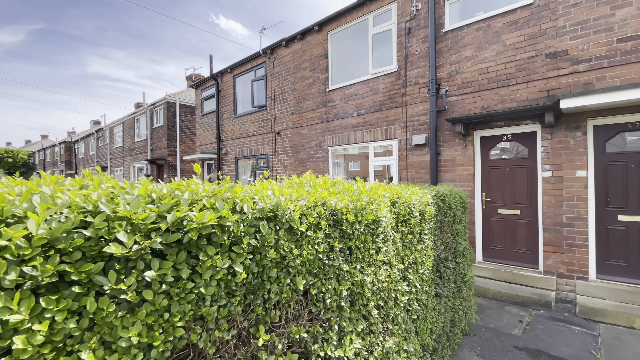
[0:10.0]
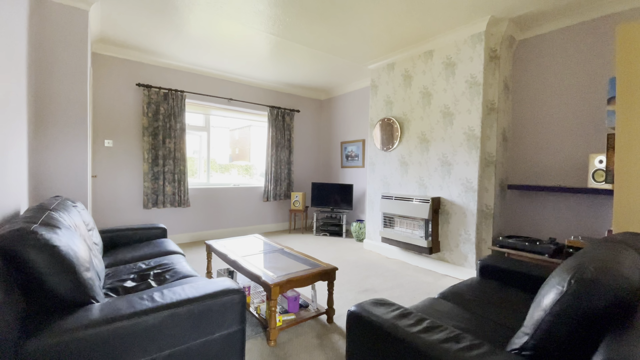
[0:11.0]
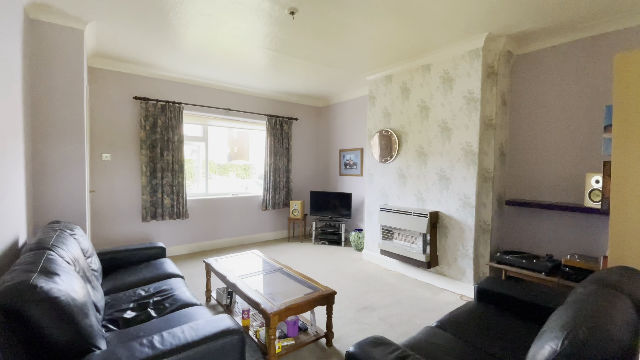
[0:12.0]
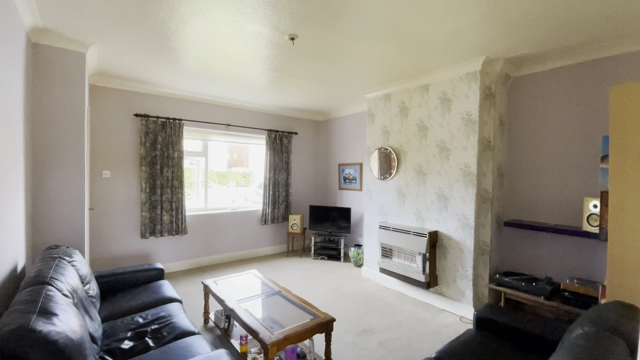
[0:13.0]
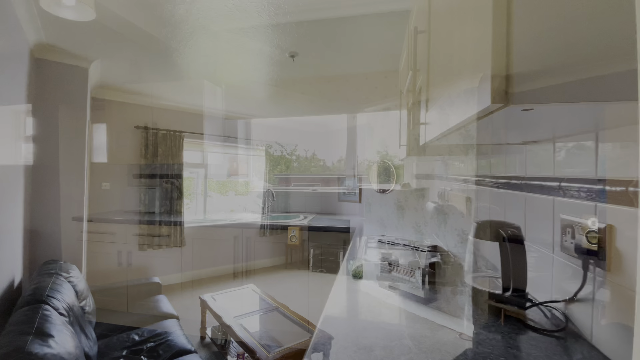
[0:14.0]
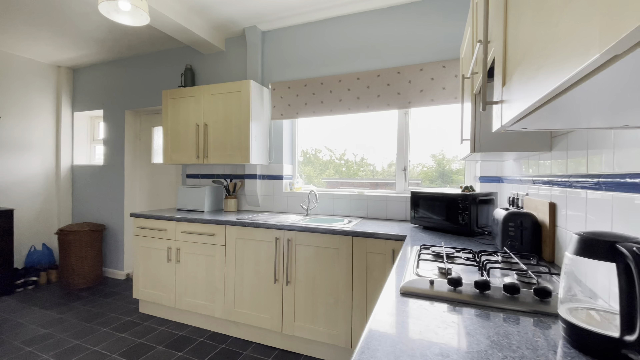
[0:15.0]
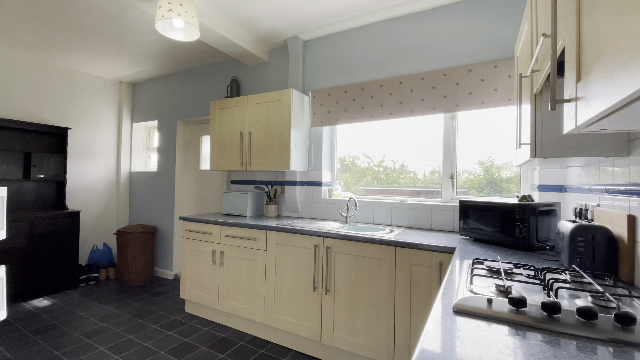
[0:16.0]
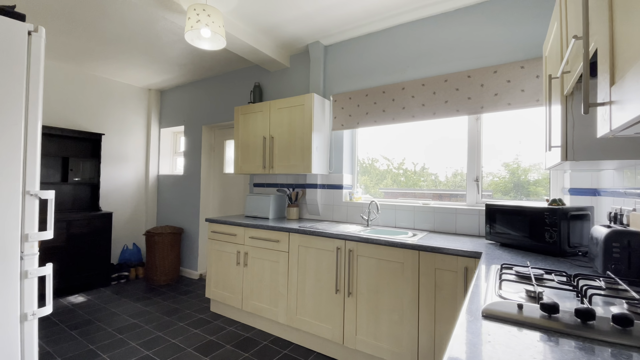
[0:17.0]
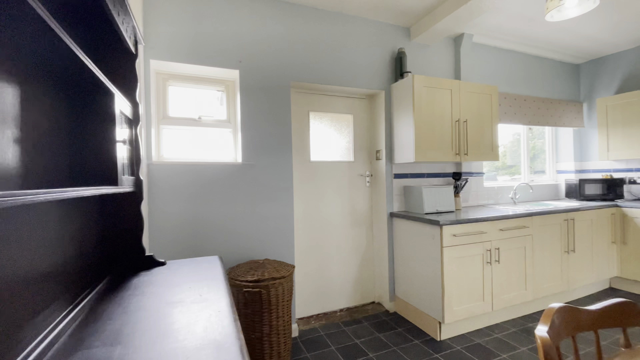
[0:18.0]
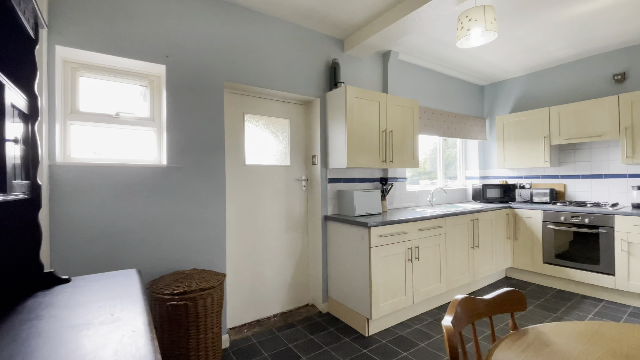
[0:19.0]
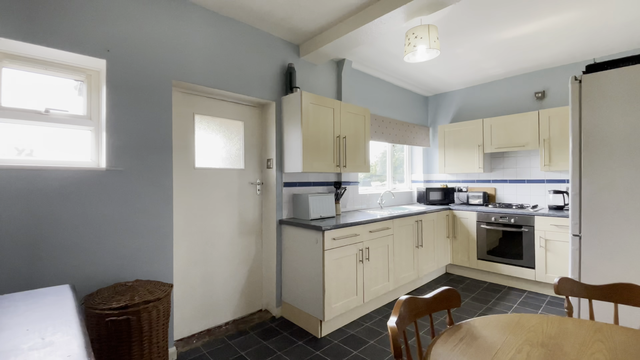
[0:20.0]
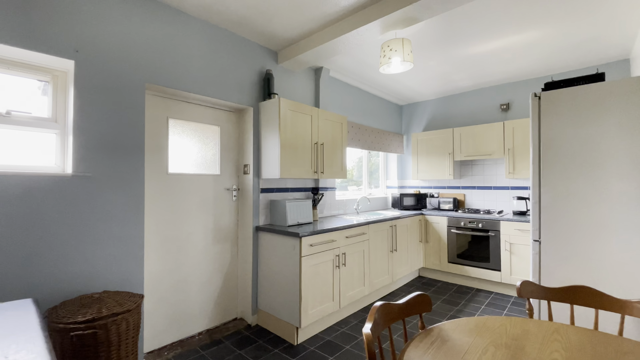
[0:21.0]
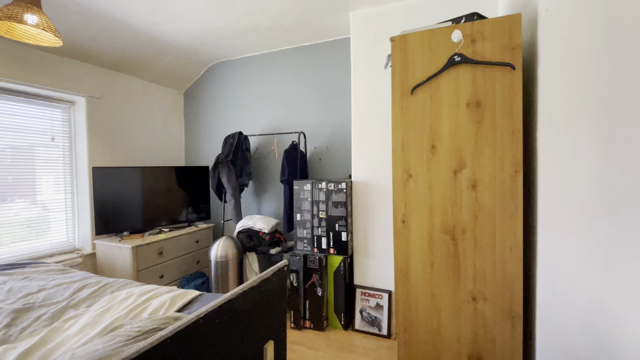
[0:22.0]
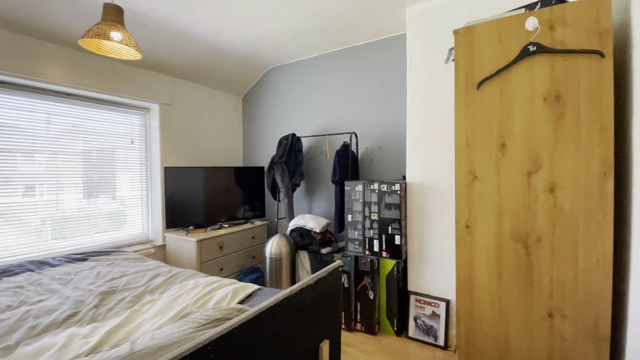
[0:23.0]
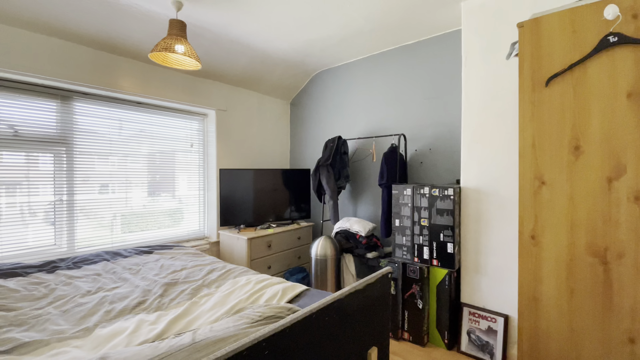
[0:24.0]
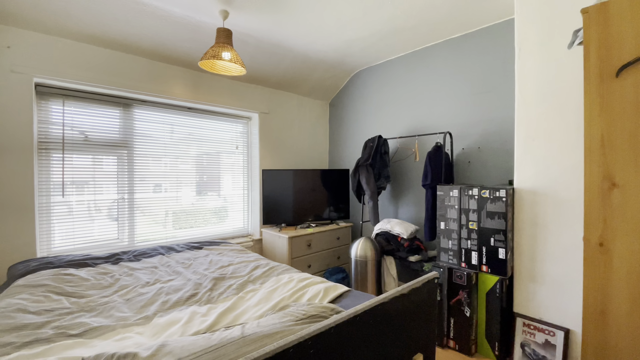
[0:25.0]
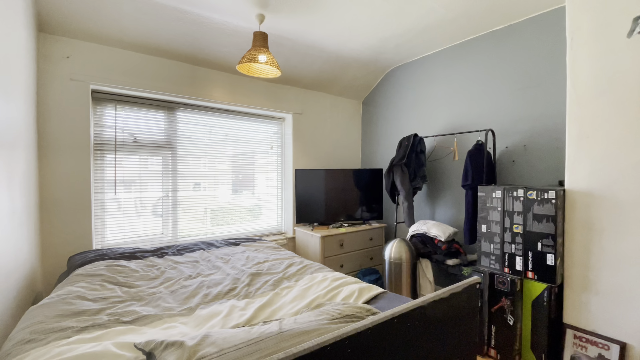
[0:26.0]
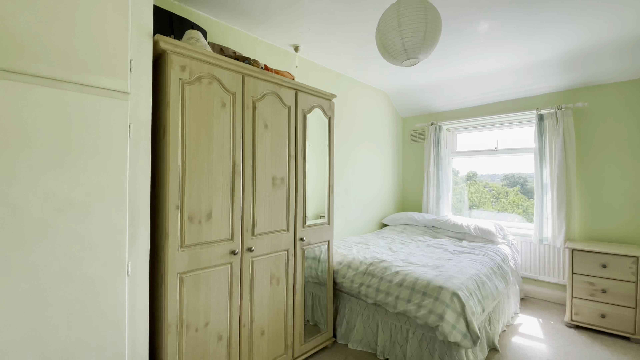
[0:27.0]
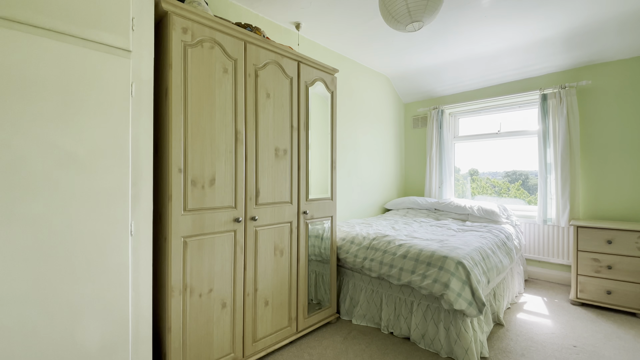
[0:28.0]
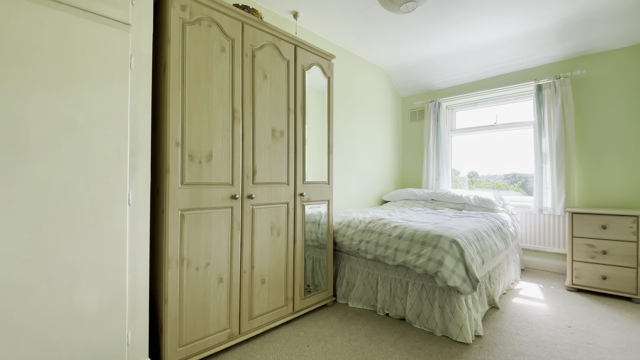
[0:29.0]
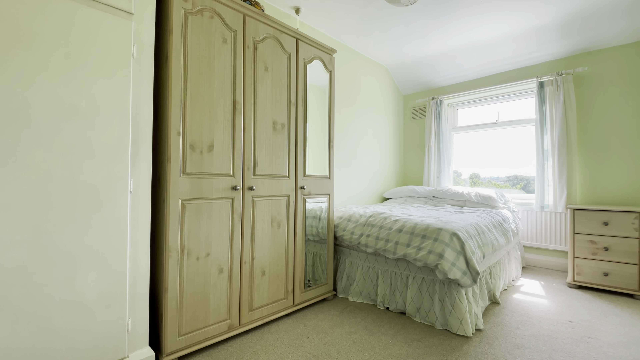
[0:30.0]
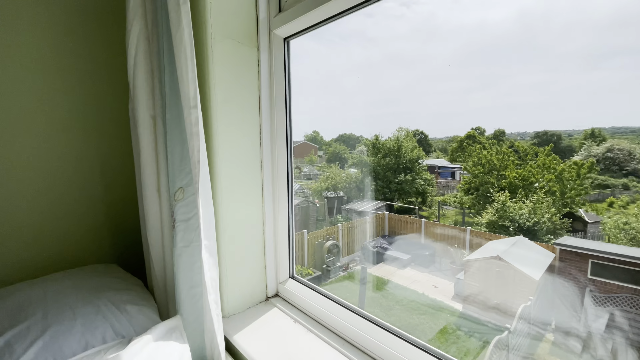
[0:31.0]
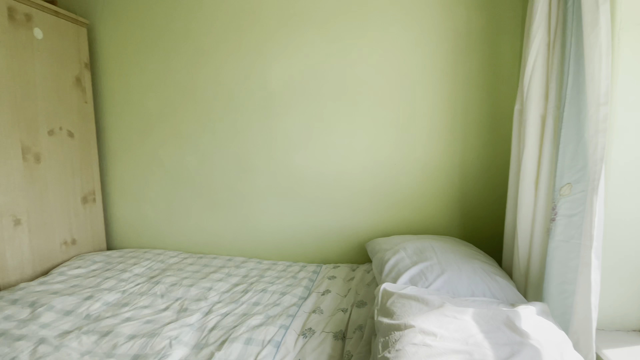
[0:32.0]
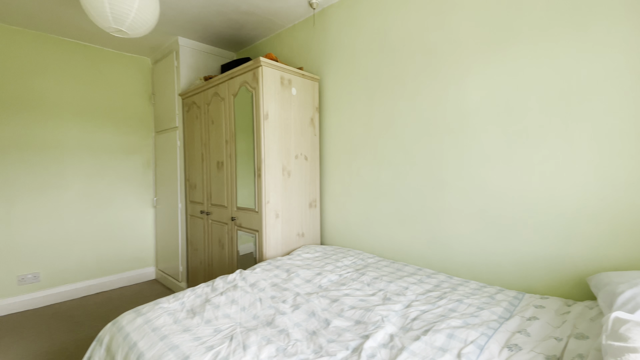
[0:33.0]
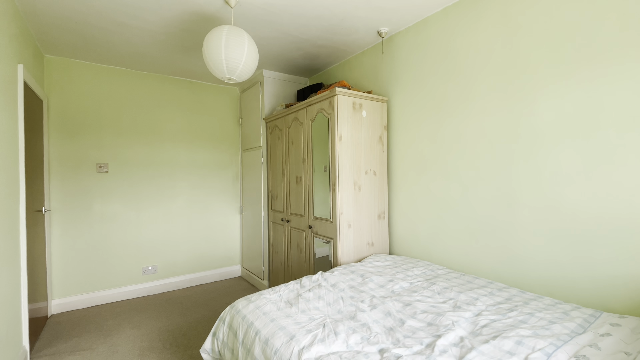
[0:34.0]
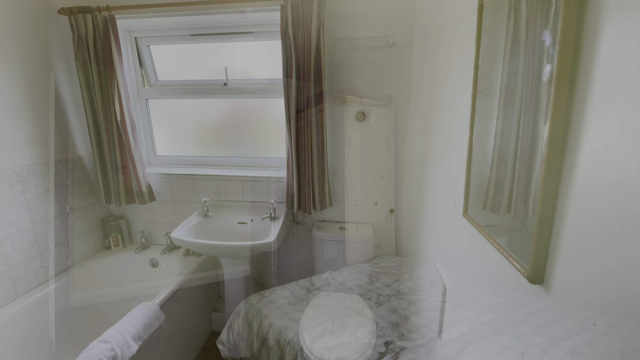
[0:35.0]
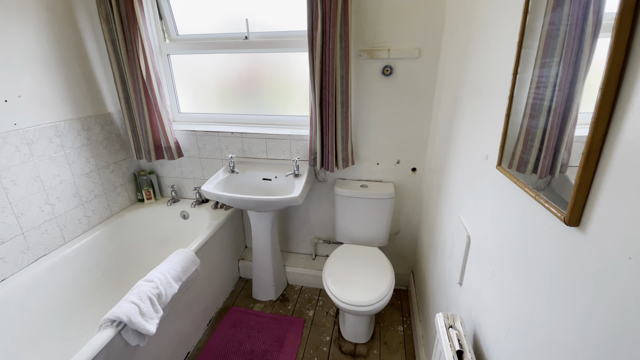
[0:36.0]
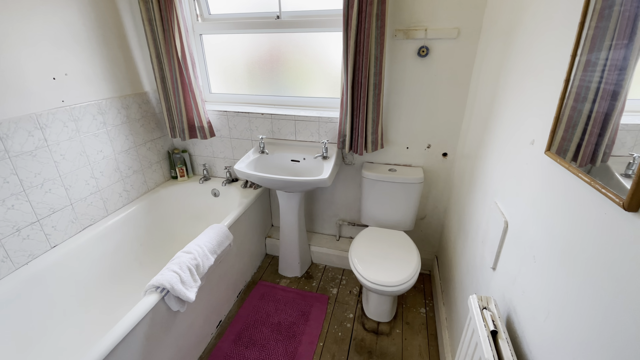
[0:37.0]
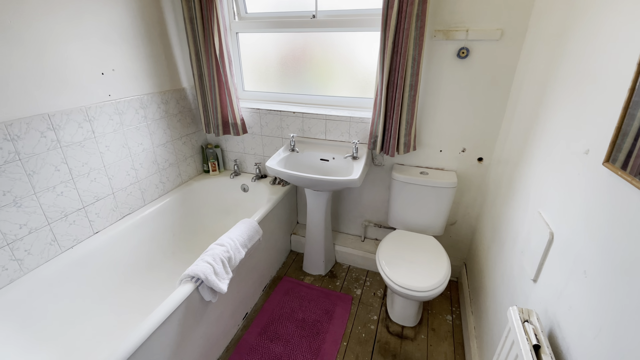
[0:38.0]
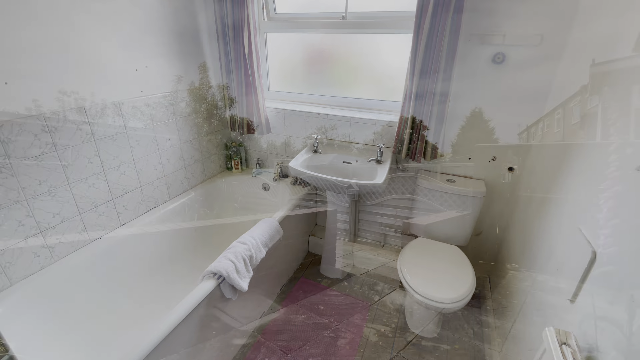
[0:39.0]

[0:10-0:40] The camera films the trimmed side of a blocky hedge while moving toward an apartment door. The scene switches to the interior of an apartment. The main living area has a light lavender wall, a pair of black leather sofas and a glass coffee table. A heating and air conditioning unit is mounted to the wall, and a small TV with a speaker is to the right of a large open window with floral drapes. There appears to be a turntable to the right of the scene. The view then shows a glossy white ceiling with an outlet for a light bulb in the center. The scene morphs to show the kitchen, with a long granite countertop, a gas stove and light brown modern kitchen cabinets. There is a long window above a sink area, and the camera pans left to show a wastebasket in the corner, the side of a refrigerator and a dark brown desk. Next to the trash can is a door with a square window. The camera then pans from left to right, showing a wooden dining table with wooden chairs in the bottom right-hand corner. A small lamp is attached to the ceiling. The scene morphs again to a bedroom with a bed pressed up against a window with blinds, a dresser with a large television set, and some boxes and other gear. The bed has a wrinkled white comforter, and a lamp hangs from the ceiling with a shade that resembles an upside-down wicker basket. The scene shifts to a second bedroom with walls painted a light mint green. Sun comes in through an open window onto a plaid comforter, and there is a wardrobe and a dresser, both light brown. The view shifts from the window of the same room to show the ceiling. The camera then shows an older-style bathroom with white walls, a standalone basin sink, a white tub, and another window that pops out with frosted glass. There are beige and maroon striped curtains, and a small towel hangs over the tub, with a red bath mat. The floor is wooden with speckles of paint on it, and the backdrop behind the tub is a mottled tile color. The scene switches to the outside once more, showing the apartment's backyard: a tiled patio with a brick separator, a scalloped fence, and the back of other apartment buildings.